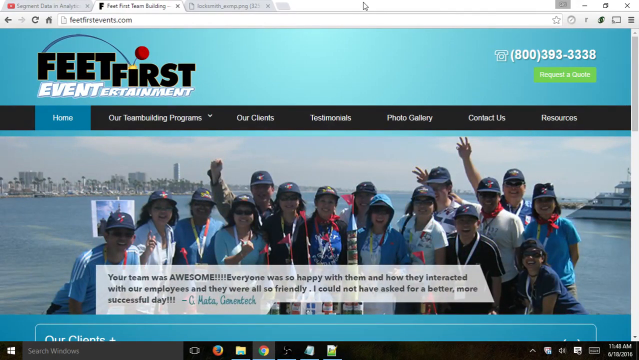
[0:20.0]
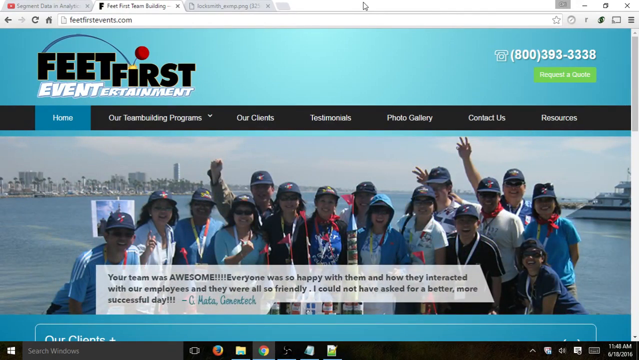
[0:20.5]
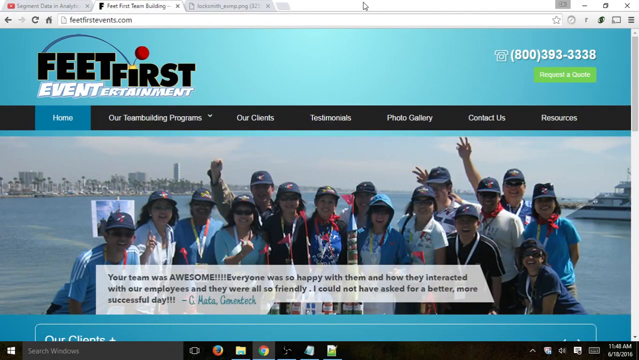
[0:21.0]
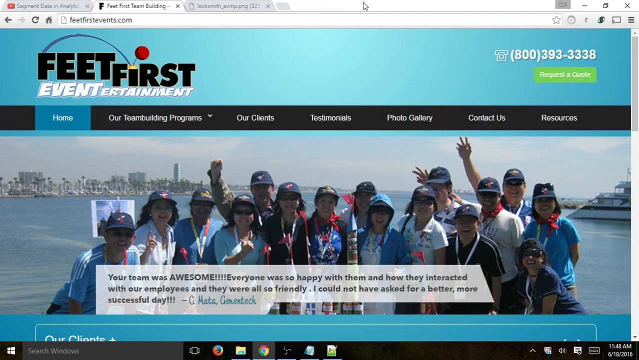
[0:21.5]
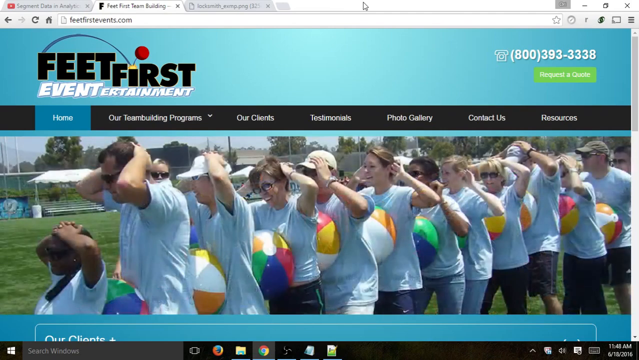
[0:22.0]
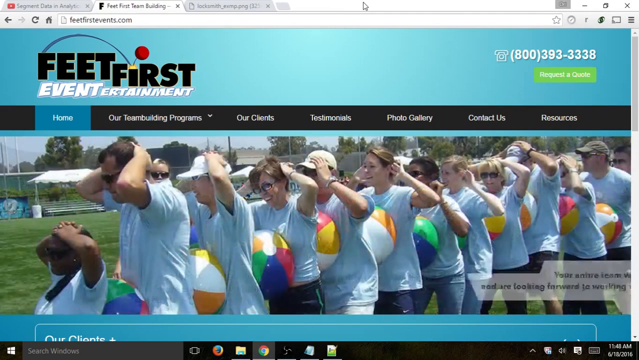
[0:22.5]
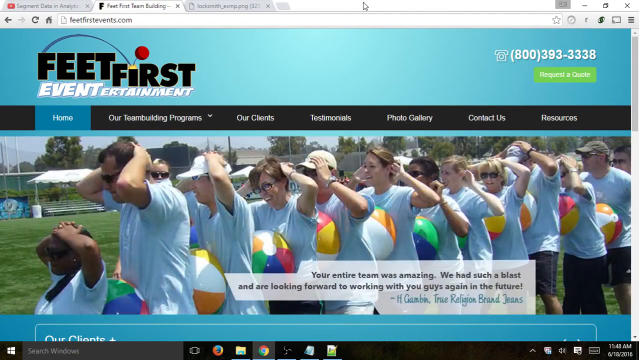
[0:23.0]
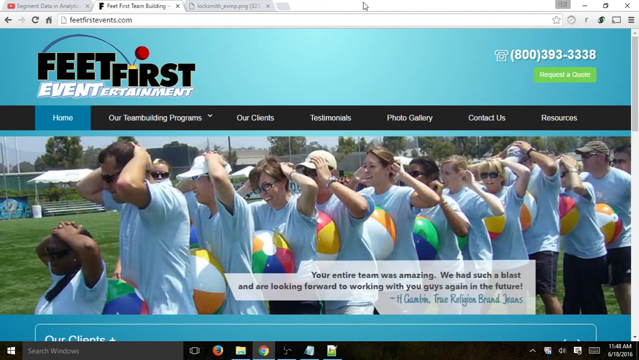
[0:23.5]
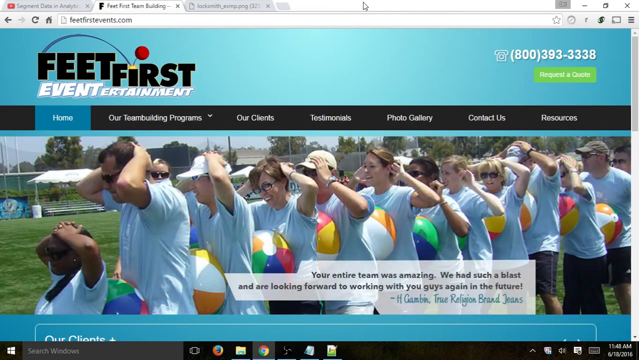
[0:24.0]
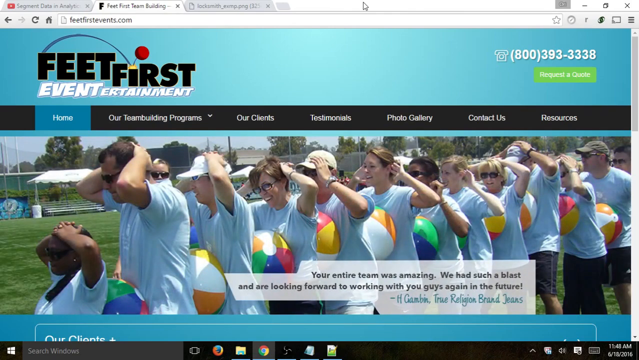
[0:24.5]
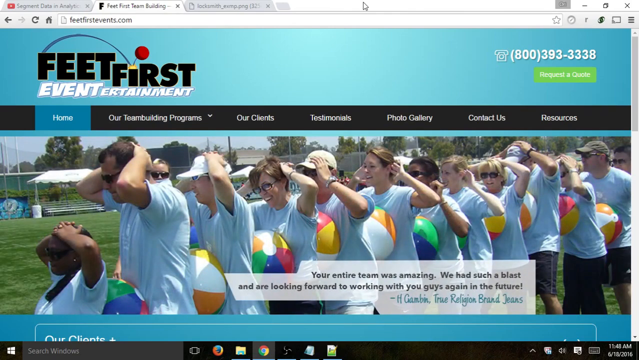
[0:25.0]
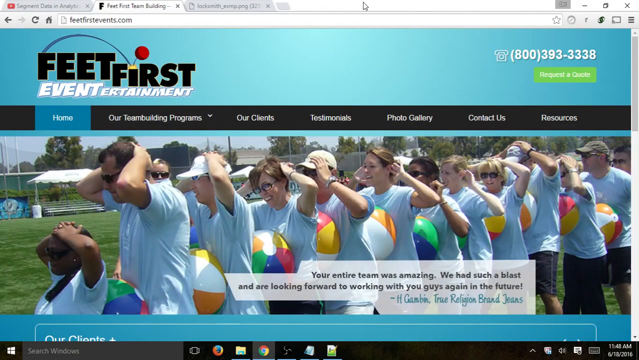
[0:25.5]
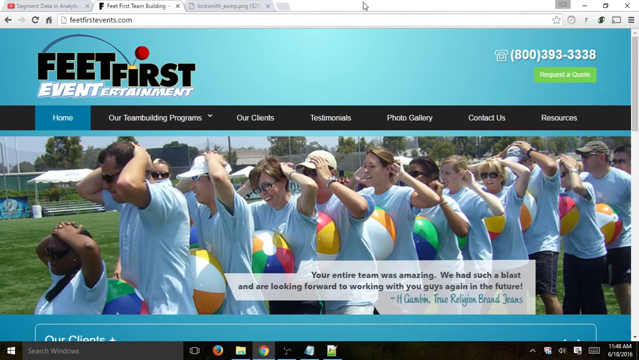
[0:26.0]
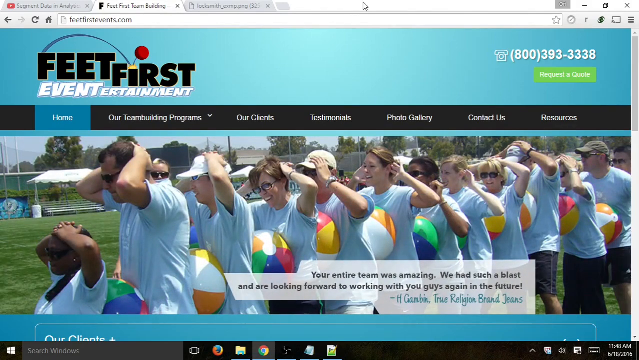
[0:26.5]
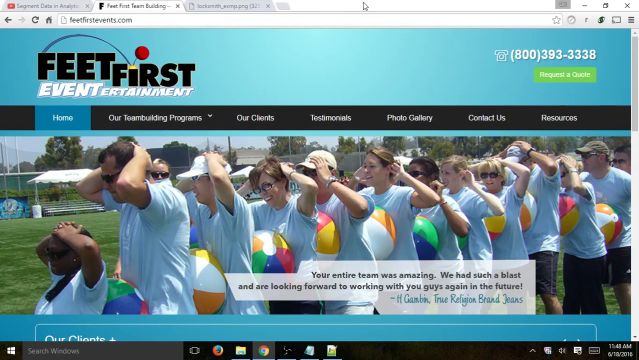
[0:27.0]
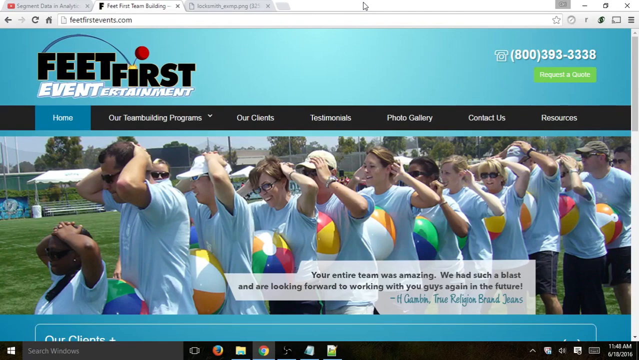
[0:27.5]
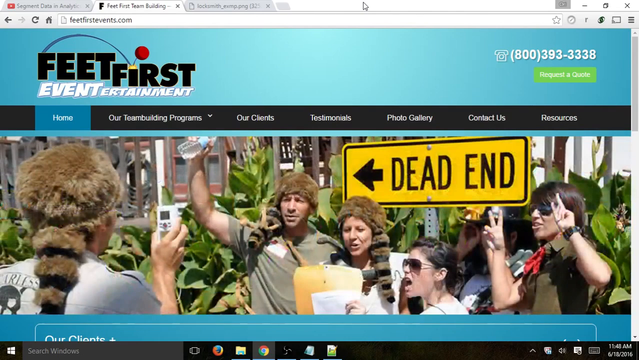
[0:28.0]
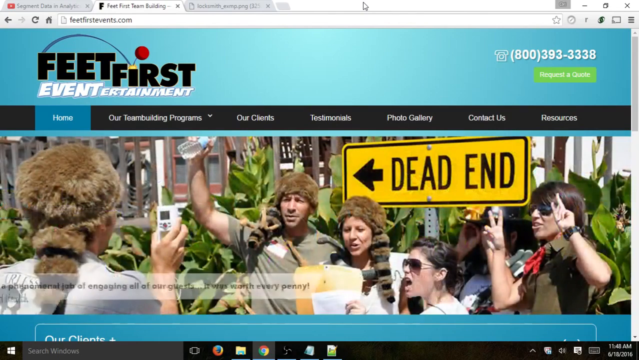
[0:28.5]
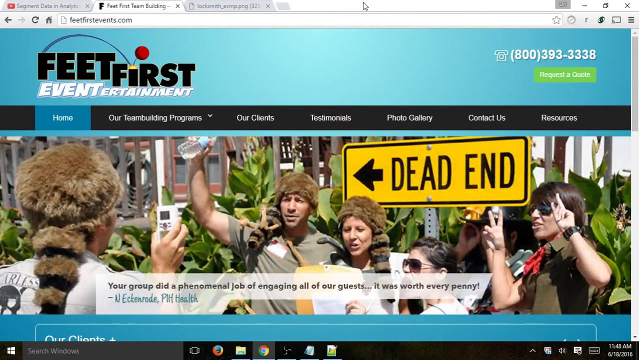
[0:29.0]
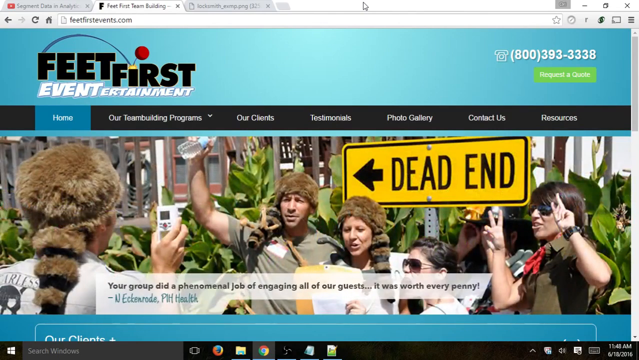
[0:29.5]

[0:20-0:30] The Feet First page shifts to a group of people with their hands on their heads who seem happy, holding beach balls between each other; it looks like they are at a baseball field with bleachers in the back, with a separate testimonial. Next it goes to another page showing a dead end sign and a group of people in what looks almost like a protest. One person holds up a water bottle, and the person with their back to the camera looks like they are taking pictures, though the device almost doesn't look like a phone. There is an arrow that says "dead end", what may be palm trees in the background, and someone holding up two peace signs.